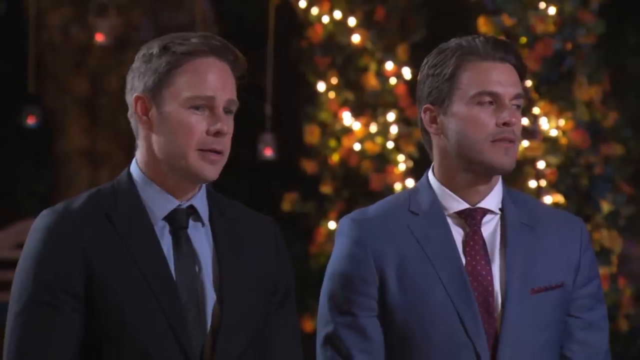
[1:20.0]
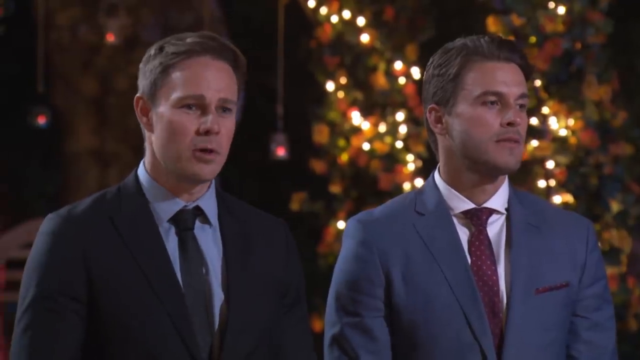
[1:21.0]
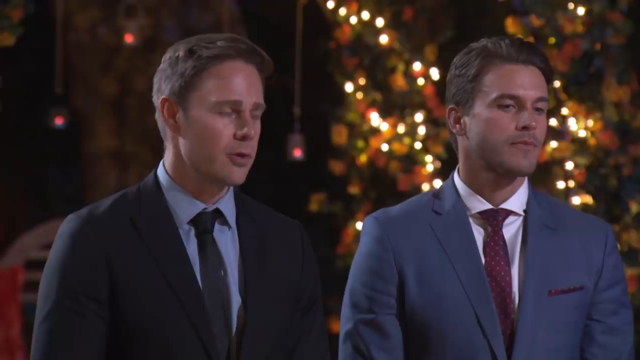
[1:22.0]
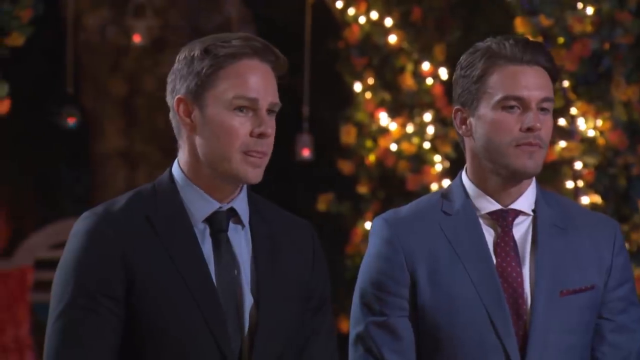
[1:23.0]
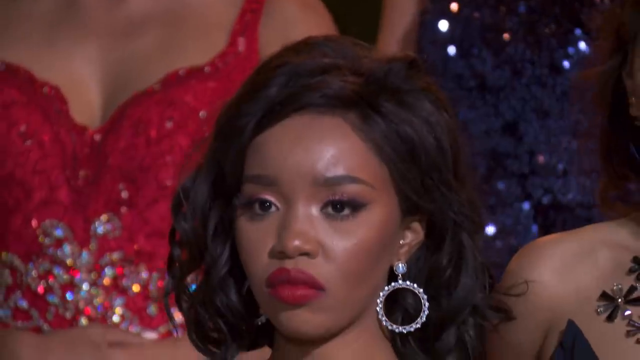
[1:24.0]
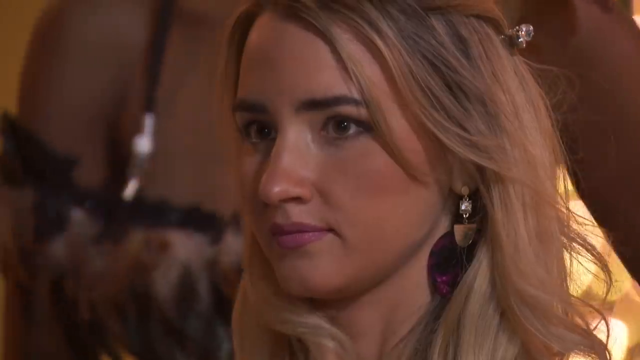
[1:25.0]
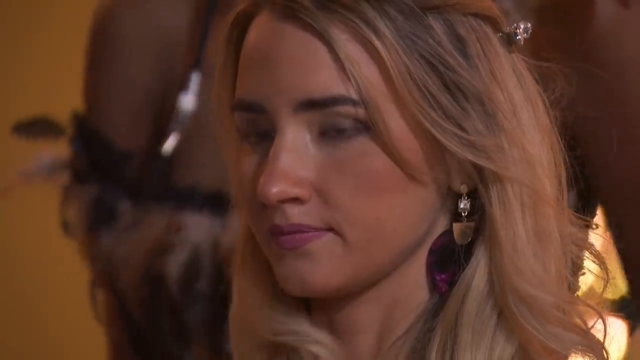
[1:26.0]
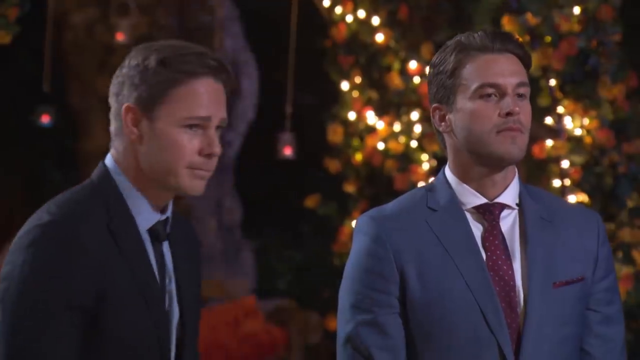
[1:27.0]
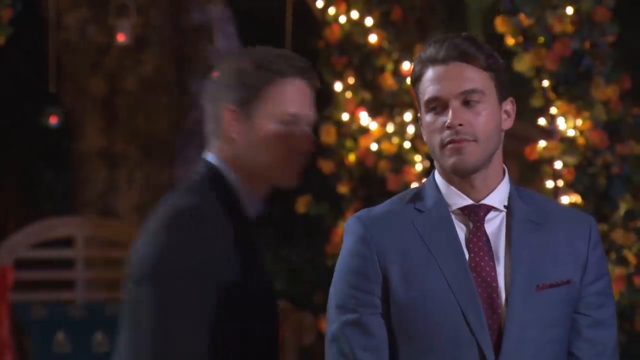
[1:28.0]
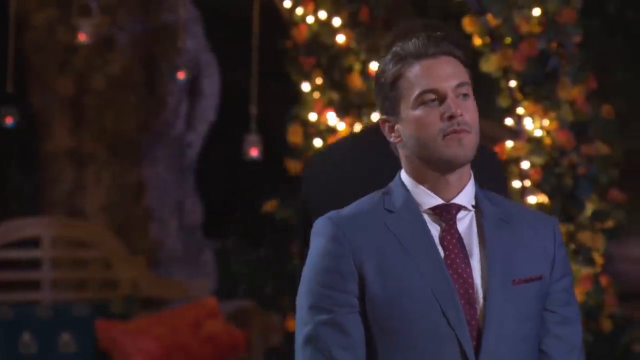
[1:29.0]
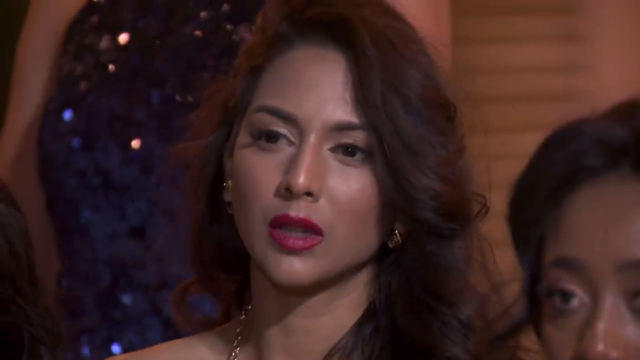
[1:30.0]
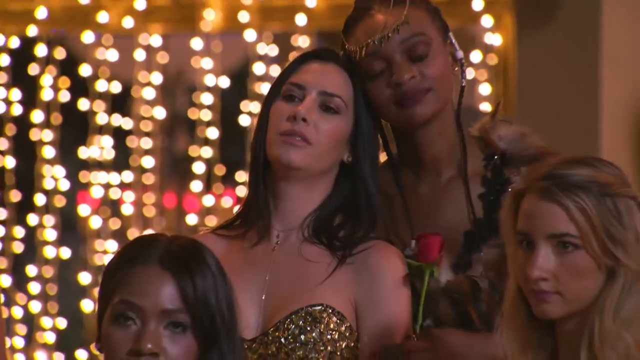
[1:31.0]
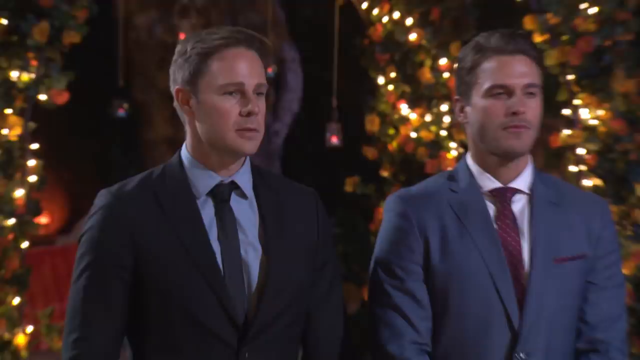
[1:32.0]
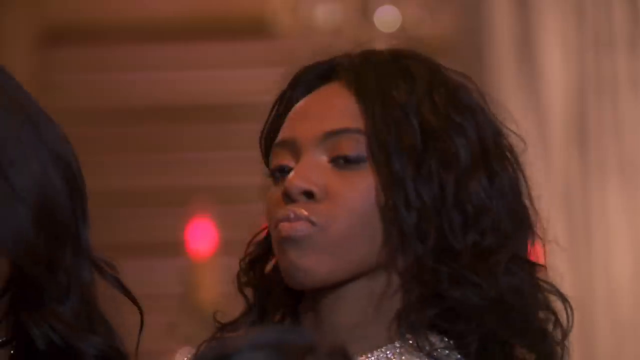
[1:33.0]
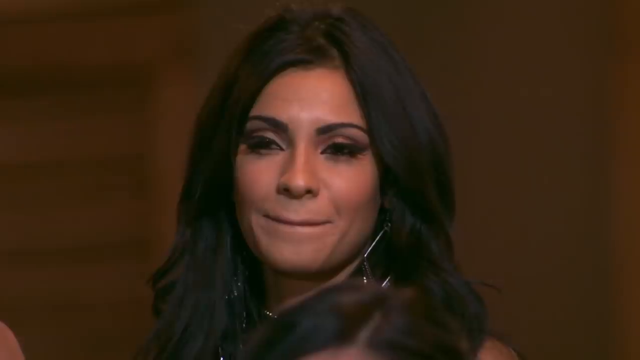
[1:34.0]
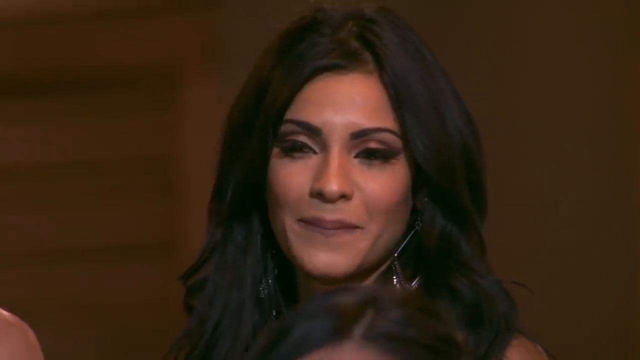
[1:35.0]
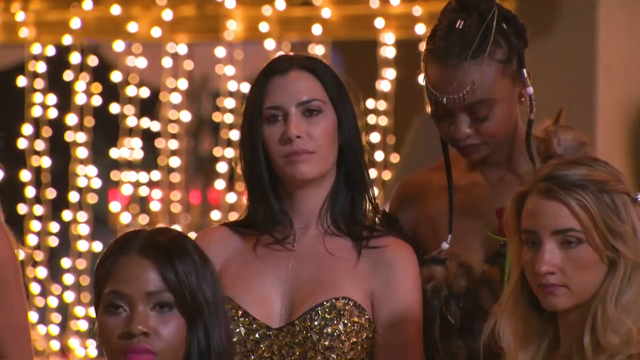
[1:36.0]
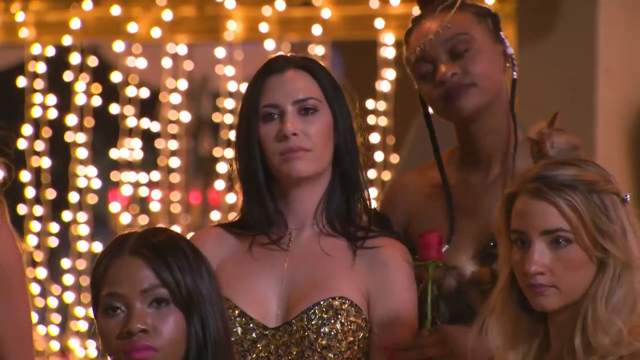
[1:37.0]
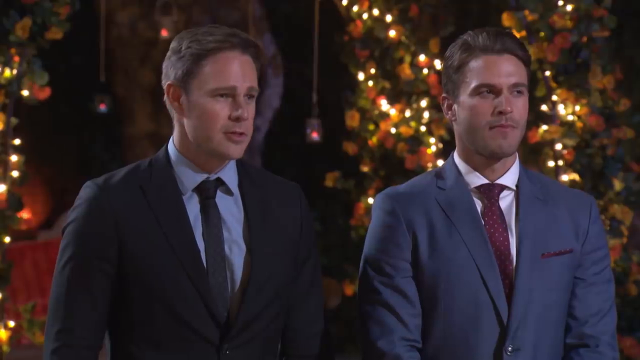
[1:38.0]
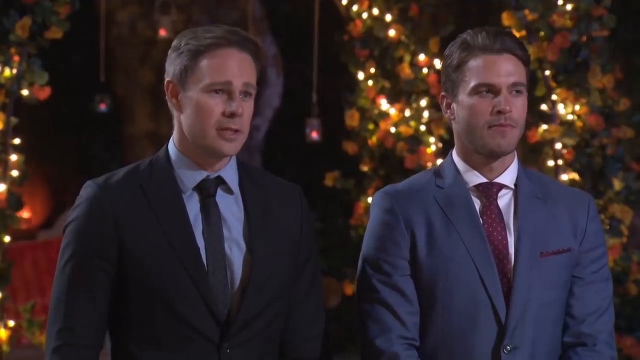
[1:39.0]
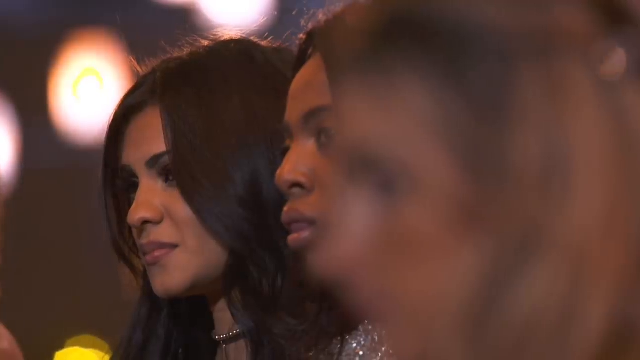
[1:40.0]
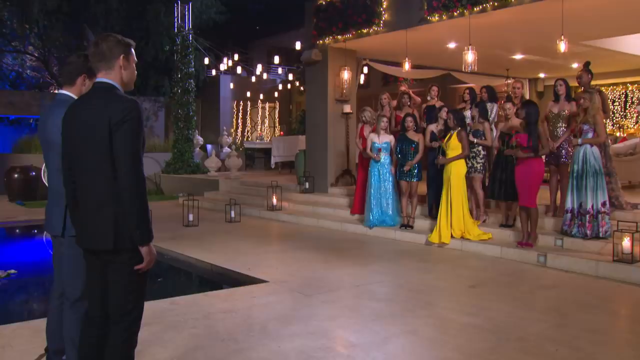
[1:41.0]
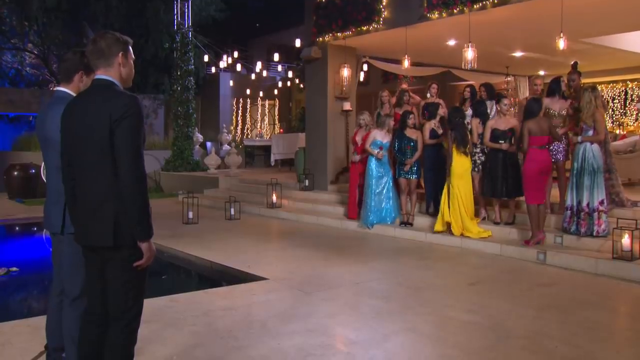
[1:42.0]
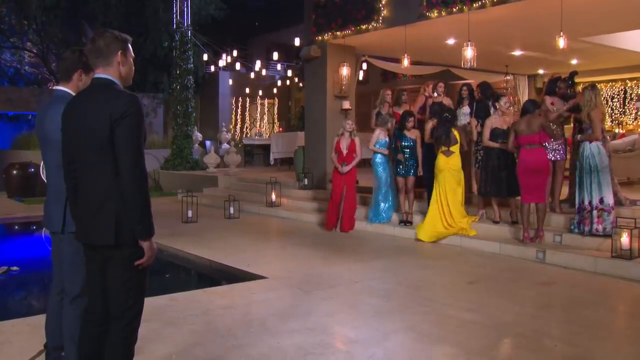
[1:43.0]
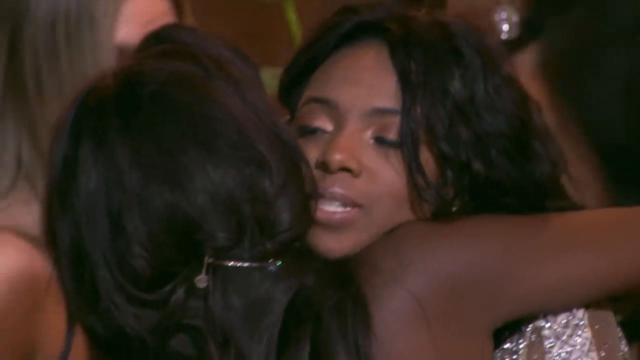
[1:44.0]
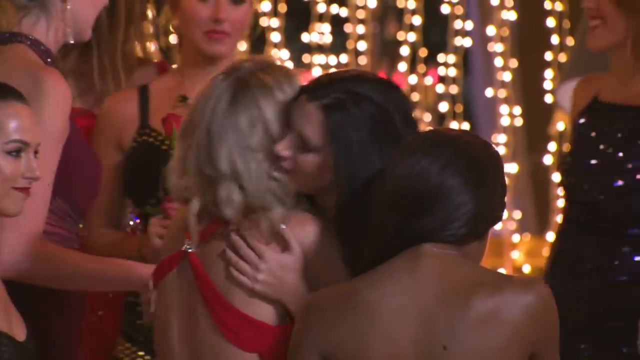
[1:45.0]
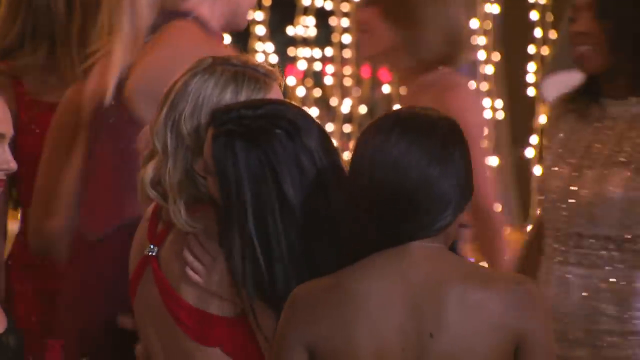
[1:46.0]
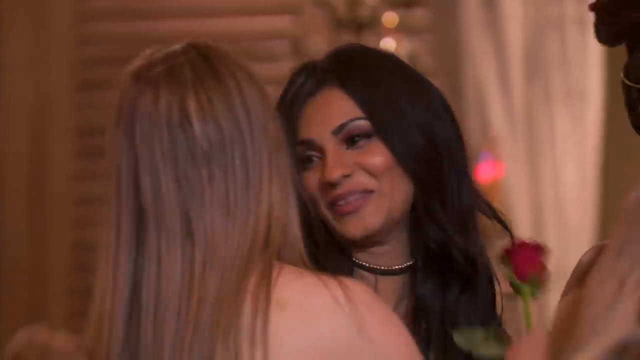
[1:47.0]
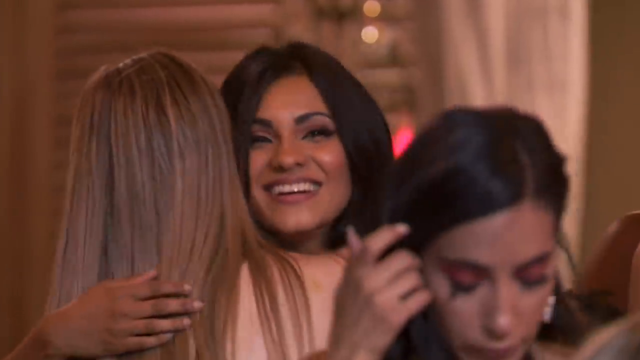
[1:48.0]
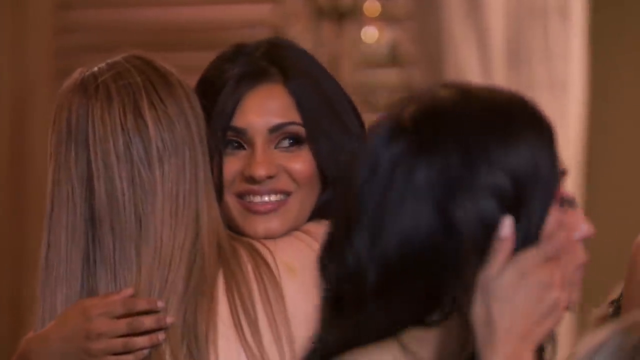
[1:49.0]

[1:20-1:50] Two white men stand side by side in a dimly lit room with many small, dim lights. The man on the left looks about 38 years old and wears a black suit with a black tie and a powder blue shirt; he has short dark hair. The man to his right wears a silver suit with a dark maroon tie and a white shirt, also looks about 38, and has short dark hair. The man on the left talks, addressing a group of about 20 women, moving his head from left to right as he speaks. The scene changes to a black woman of about 27 to 30 with bright red lipstick, white hoop earrings hollow in the middle, and hair coming slightly to her shoulders; she looks rather angry. The scene then focuses on a white blonde woman of about 30 wearing light pink lipstick.